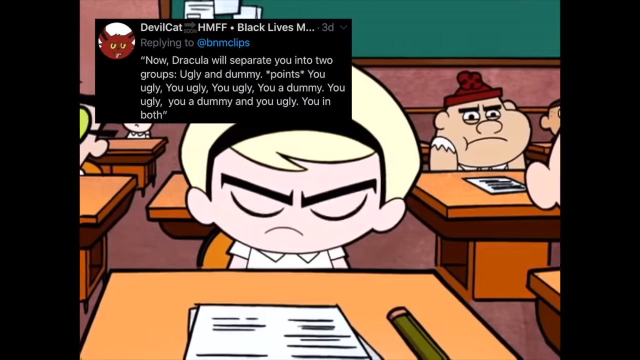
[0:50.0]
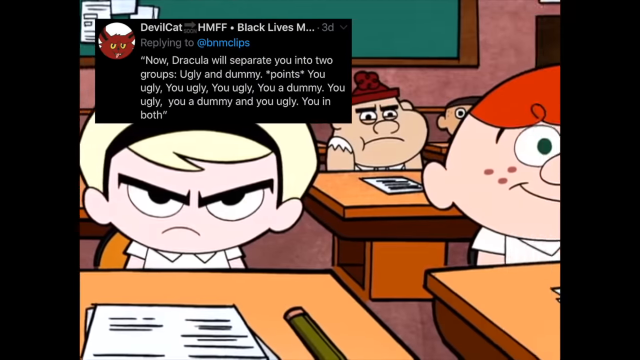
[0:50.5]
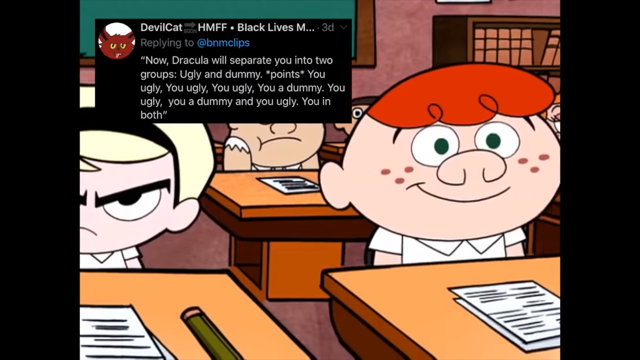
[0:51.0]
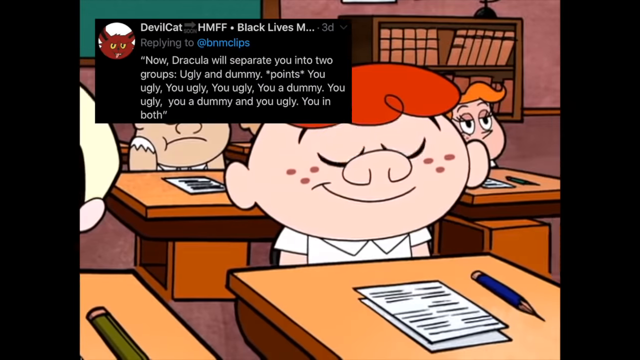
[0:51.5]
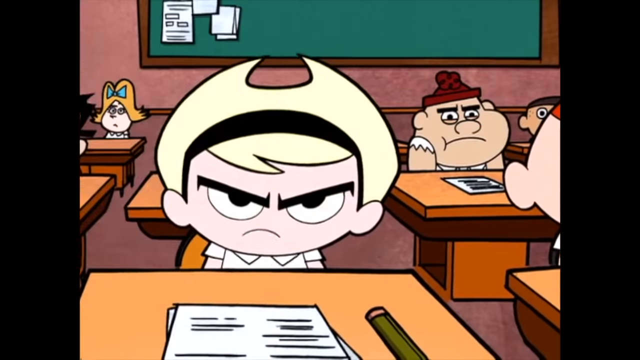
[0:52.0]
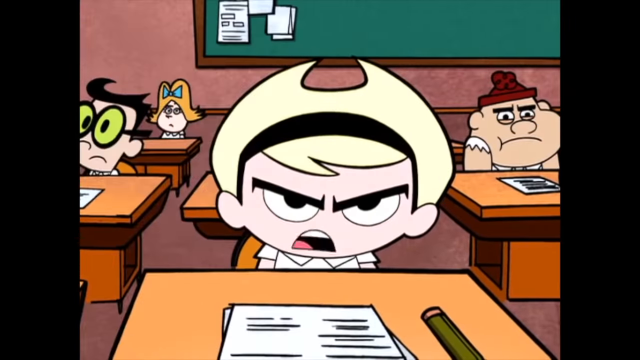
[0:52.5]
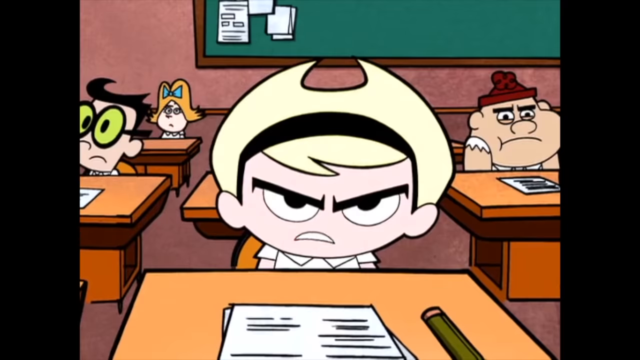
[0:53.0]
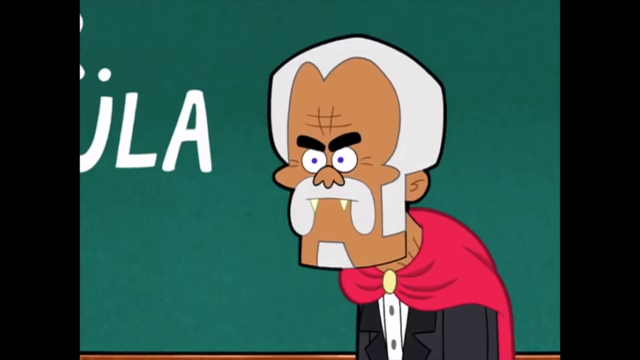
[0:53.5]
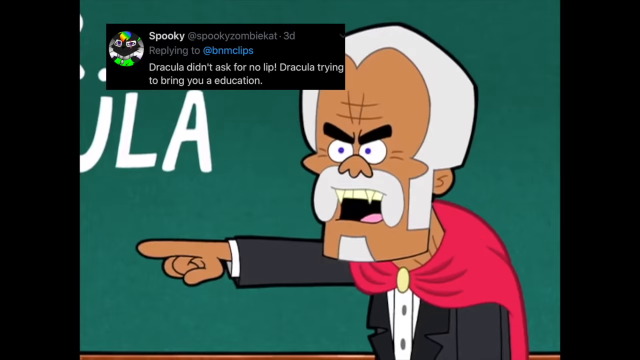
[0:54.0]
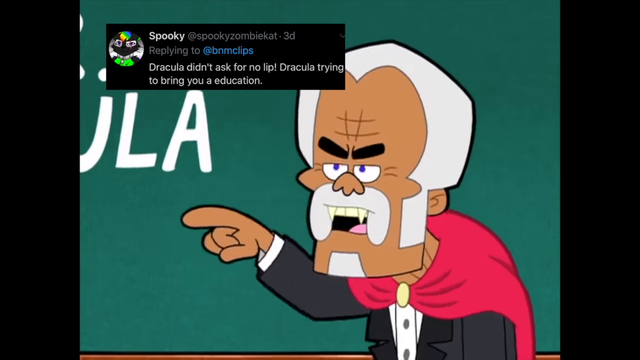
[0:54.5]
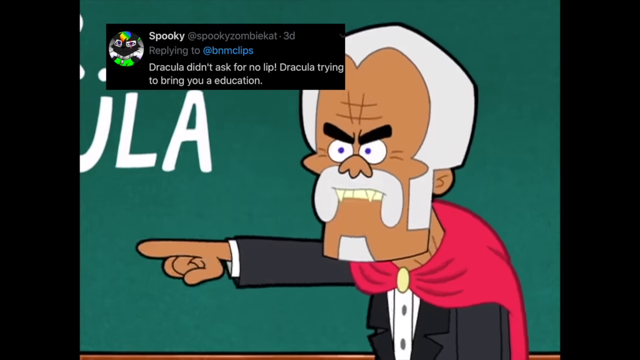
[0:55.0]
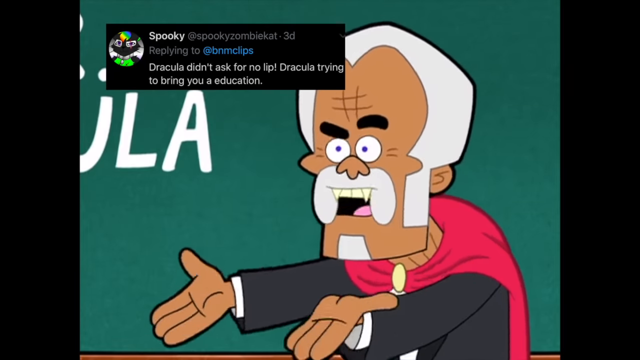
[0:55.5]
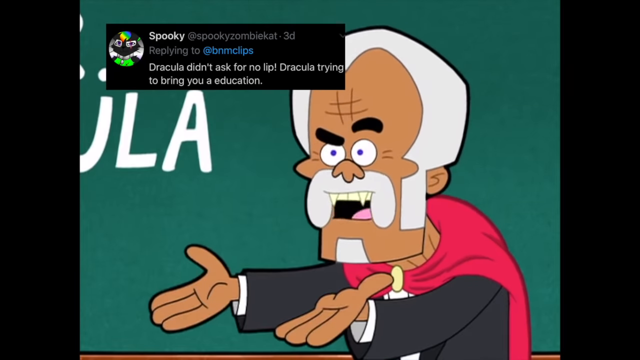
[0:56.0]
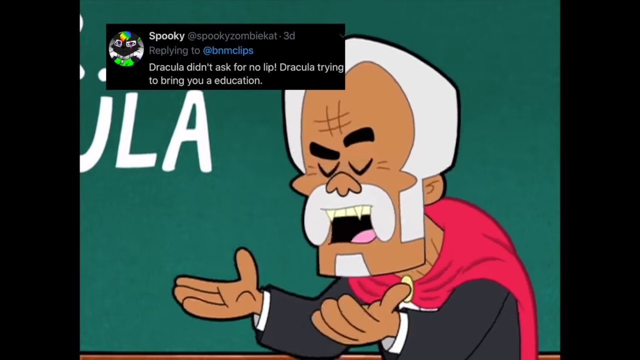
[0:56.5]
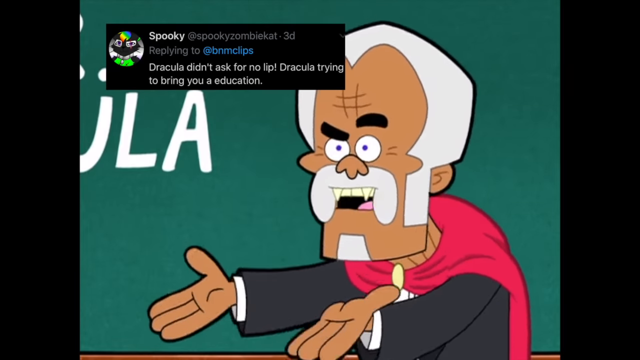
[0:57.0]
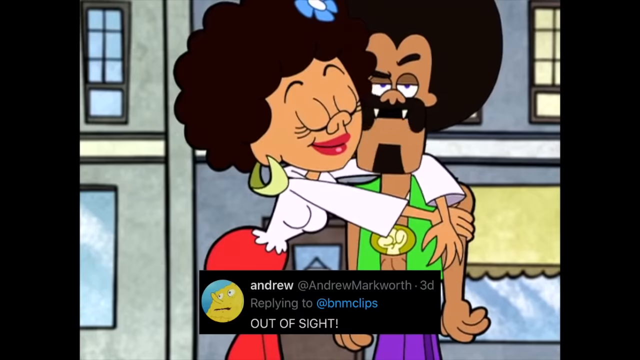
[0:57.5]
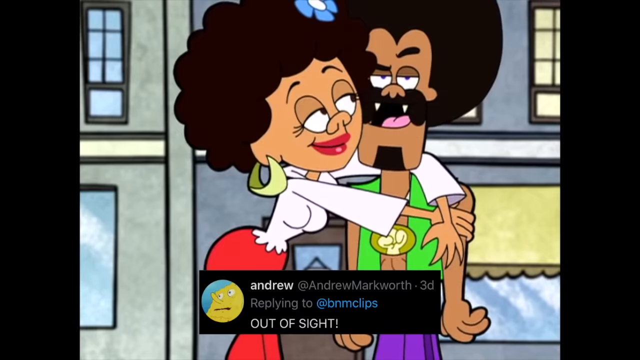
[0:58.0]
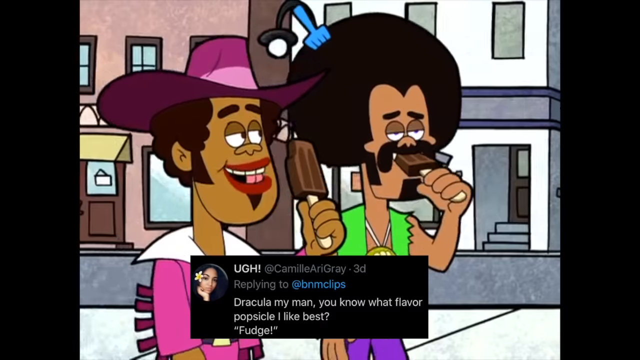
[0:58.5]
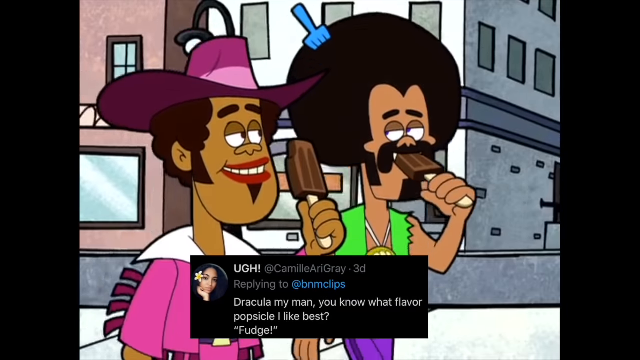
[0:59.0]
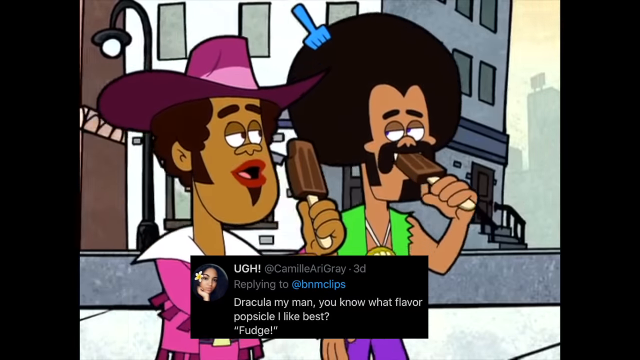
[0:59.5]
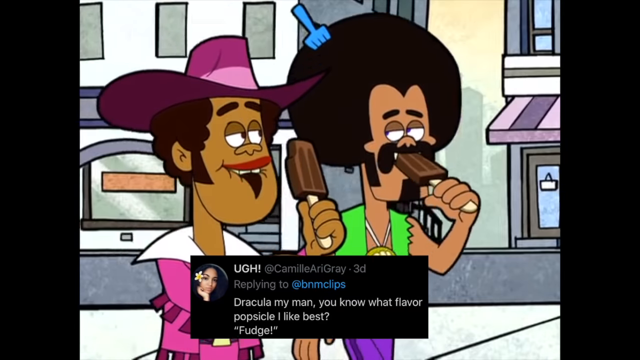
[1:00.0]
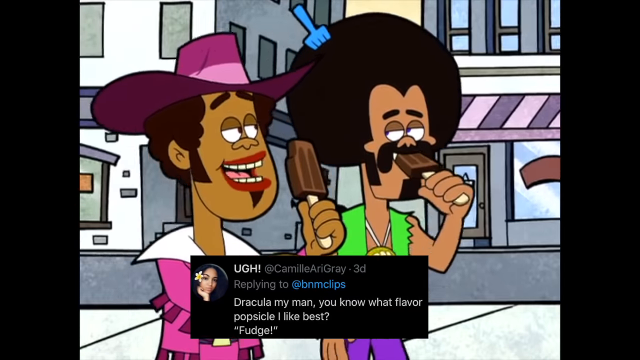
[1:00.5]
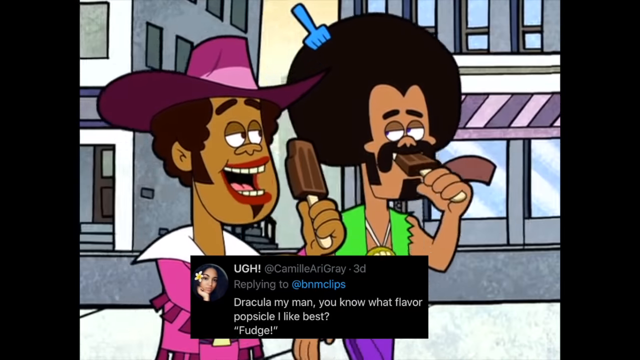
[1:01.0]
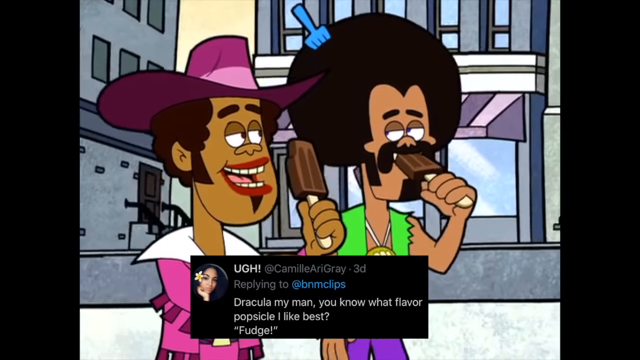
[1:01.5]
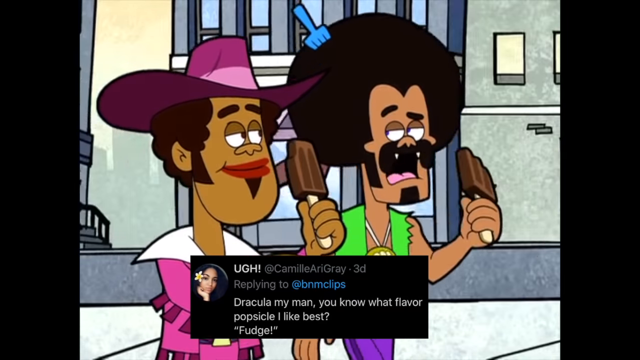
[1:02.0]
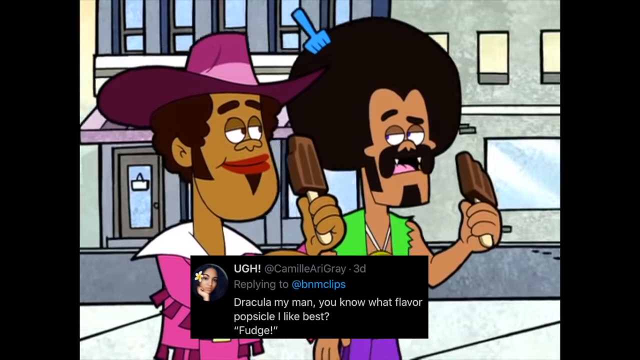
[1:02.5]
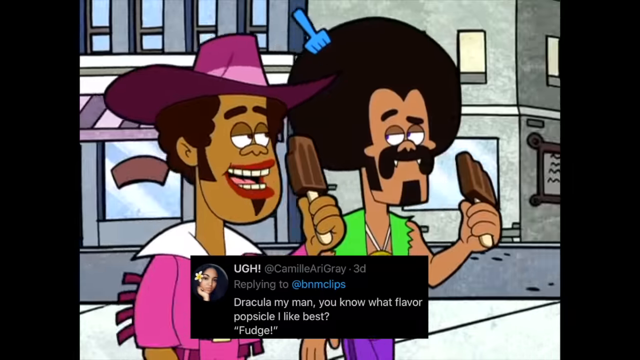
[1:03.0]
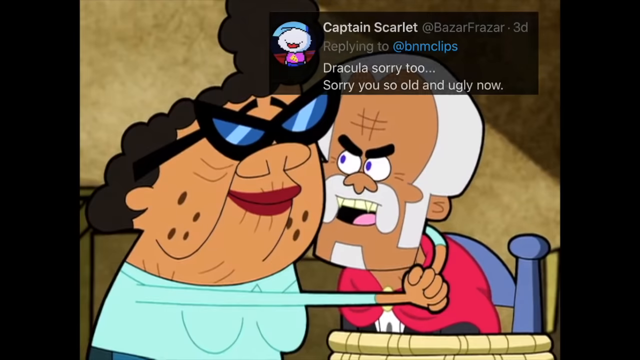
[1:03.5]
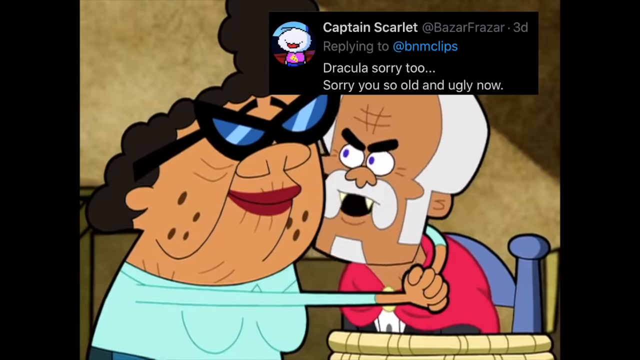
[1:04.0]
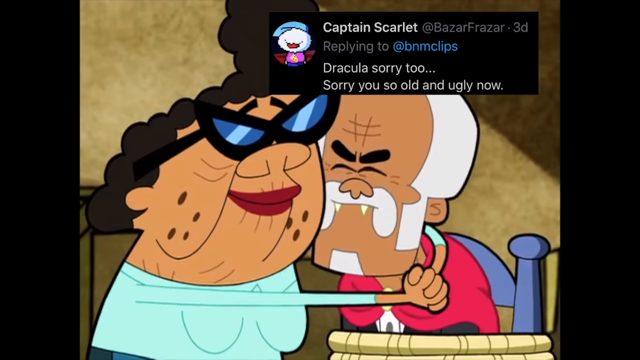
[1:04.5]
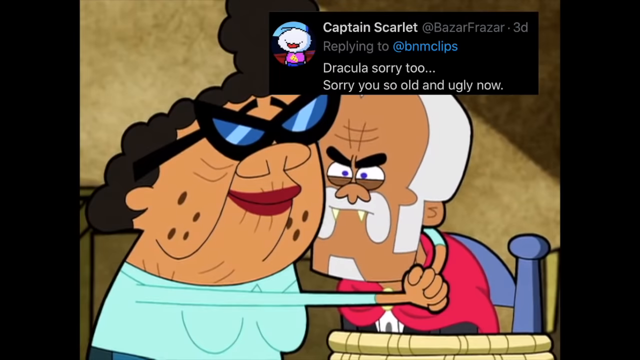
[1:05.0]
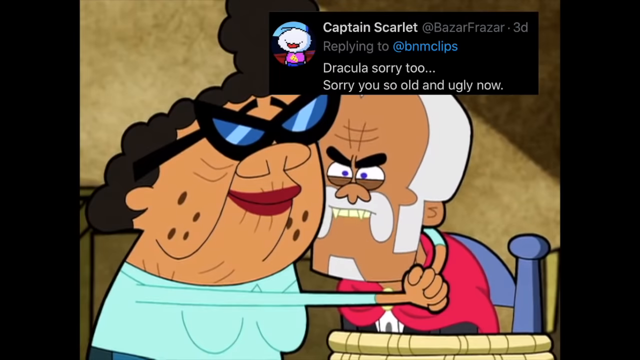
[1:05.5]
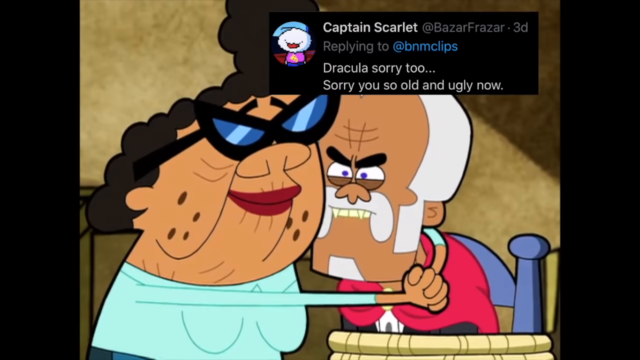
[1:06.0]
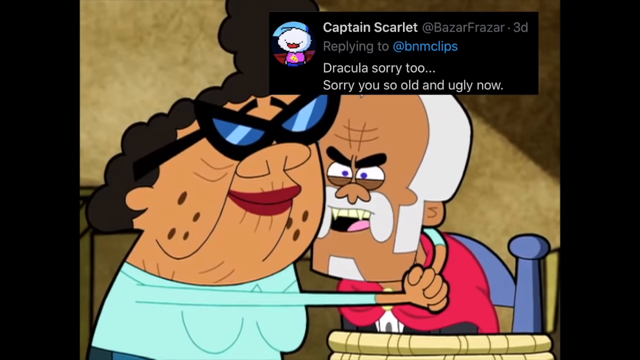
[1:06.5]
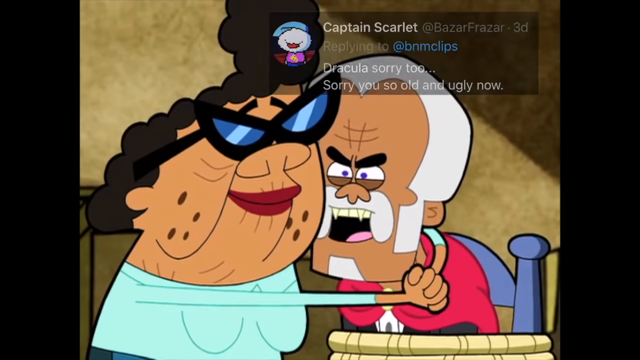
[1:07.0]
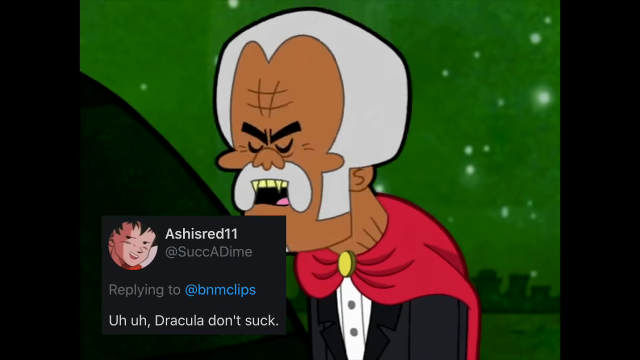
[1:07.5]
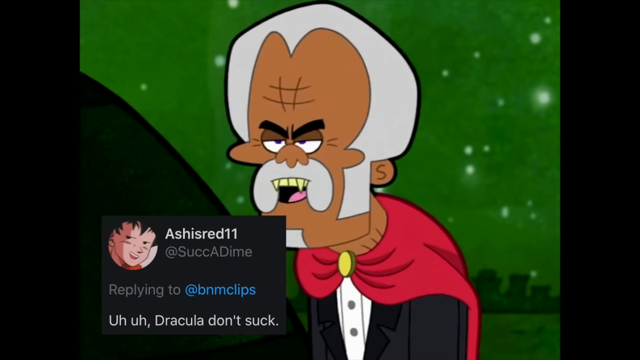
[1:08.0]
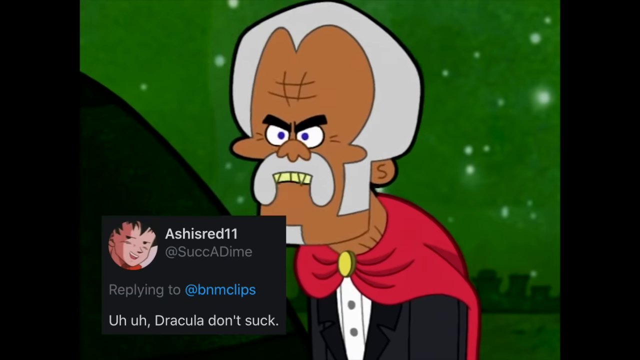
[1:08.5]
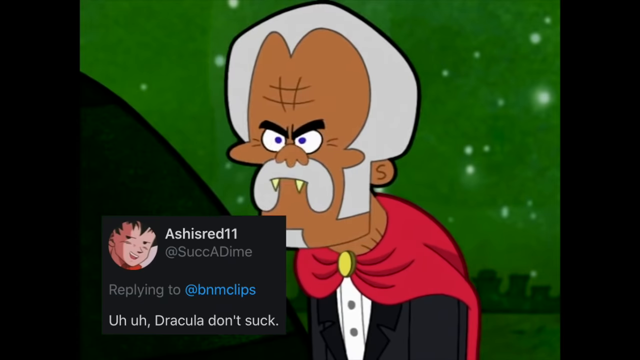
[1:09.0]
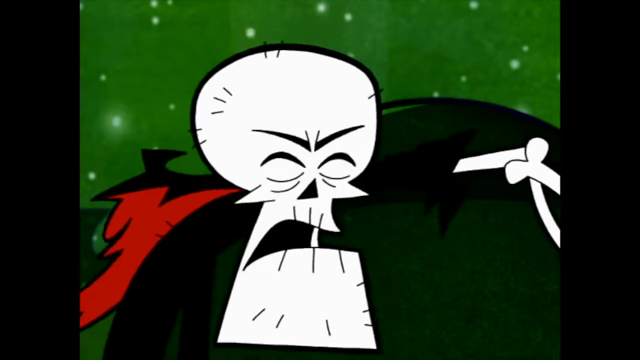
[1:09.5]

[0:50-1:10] An animated scene shows little kids sitting at their desks in a classroom, with papers in front of them and pens beside them. They all look a little disgruntled or angry. A message at the top, which looks like a posted comment, refers to separating two groups, "ugly and dumb". It looks like Dracula is teaching the class. The scene then shows two African-American vampires walking down the street, both eating chocolate fudgesicles. It then switches back to Dracula, who has been kidnapped from the class and is tied to a chair, being held for ransom.